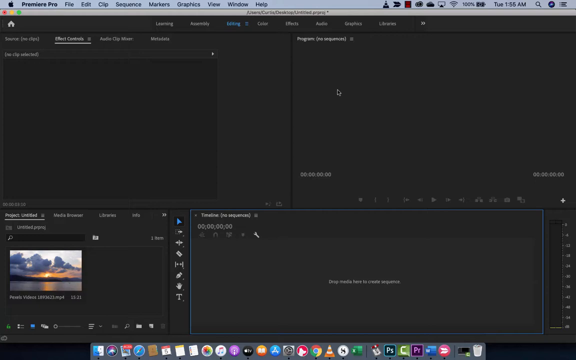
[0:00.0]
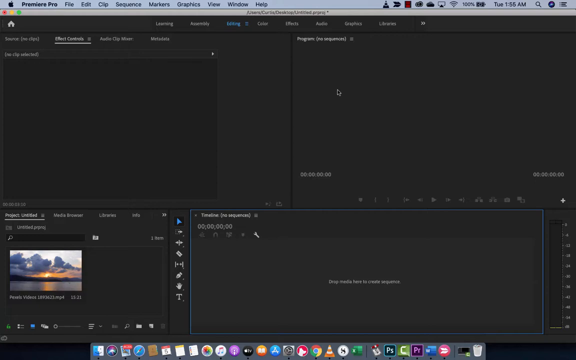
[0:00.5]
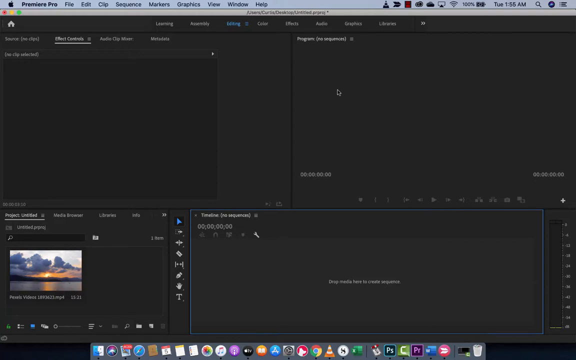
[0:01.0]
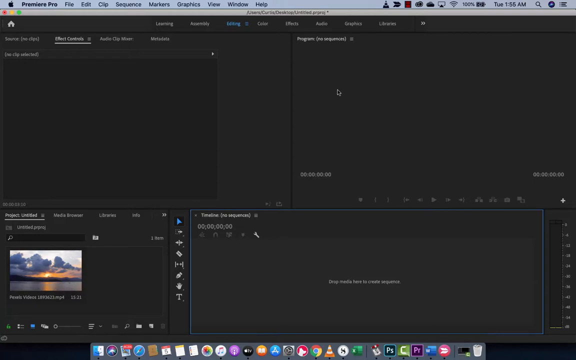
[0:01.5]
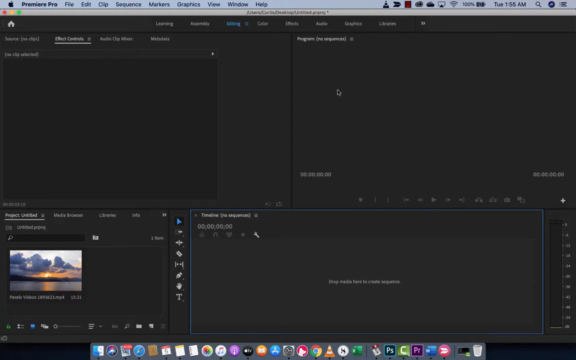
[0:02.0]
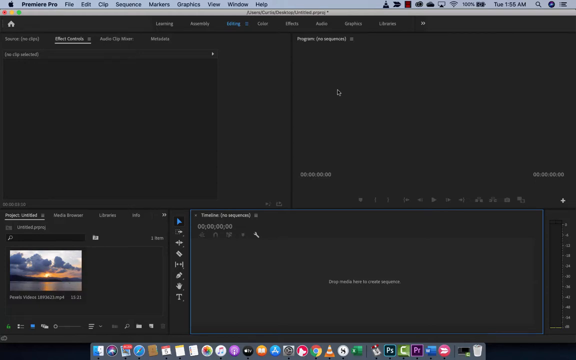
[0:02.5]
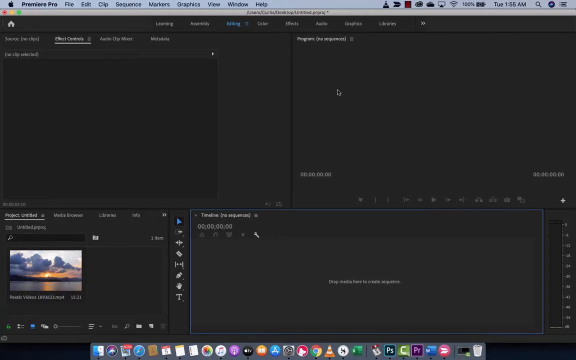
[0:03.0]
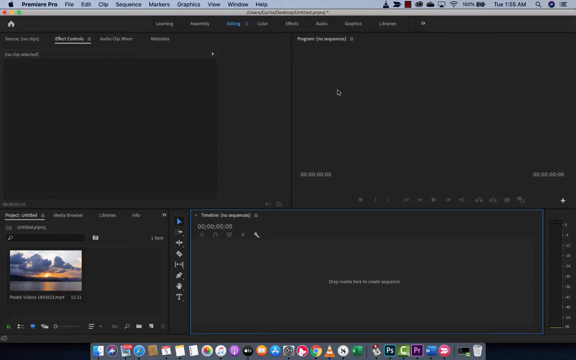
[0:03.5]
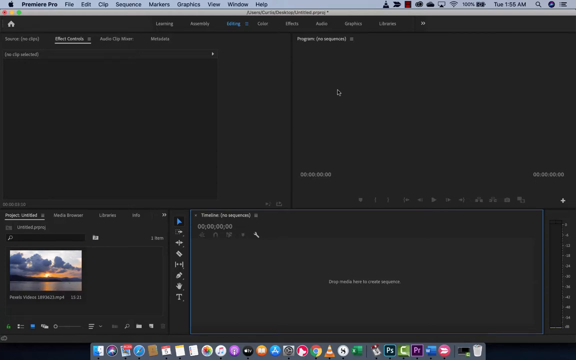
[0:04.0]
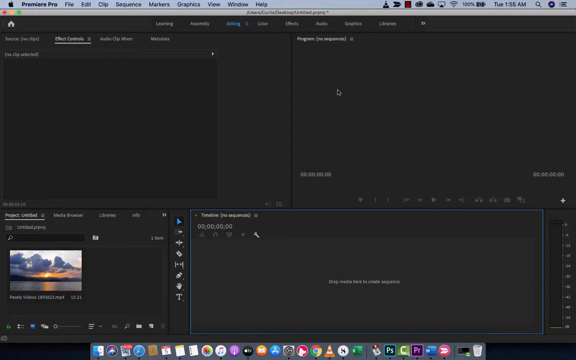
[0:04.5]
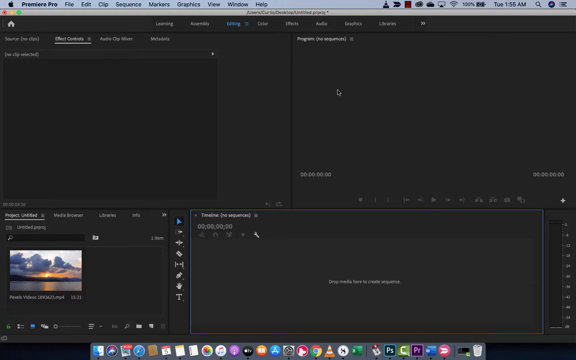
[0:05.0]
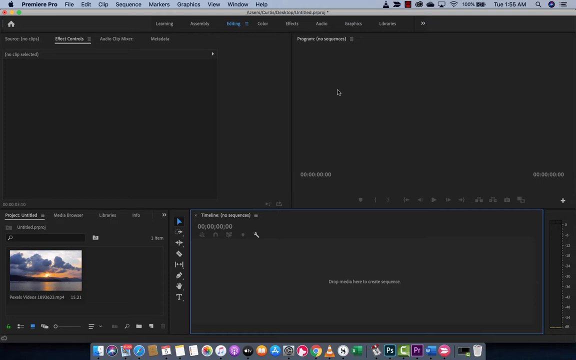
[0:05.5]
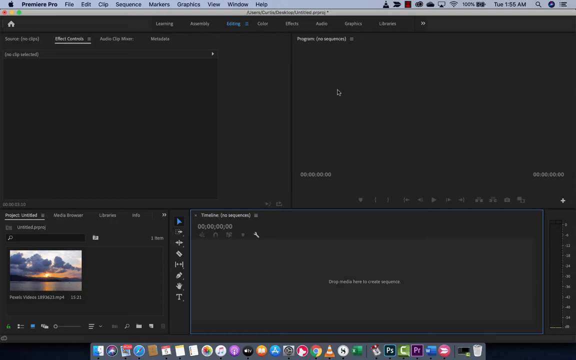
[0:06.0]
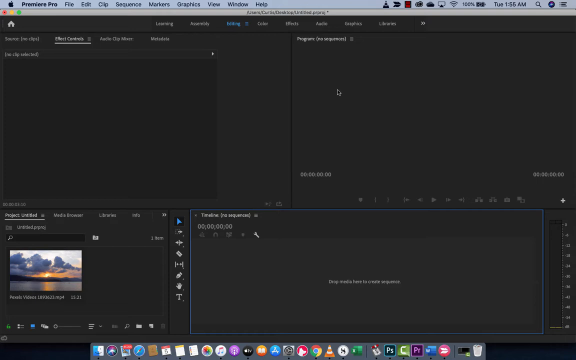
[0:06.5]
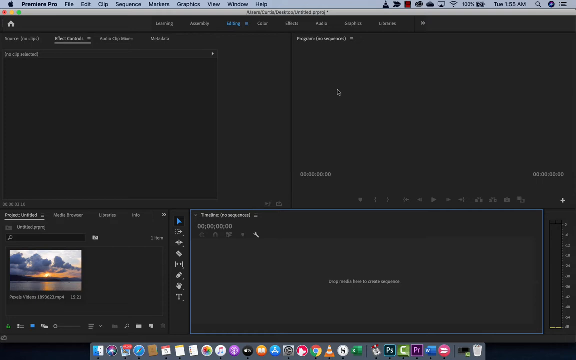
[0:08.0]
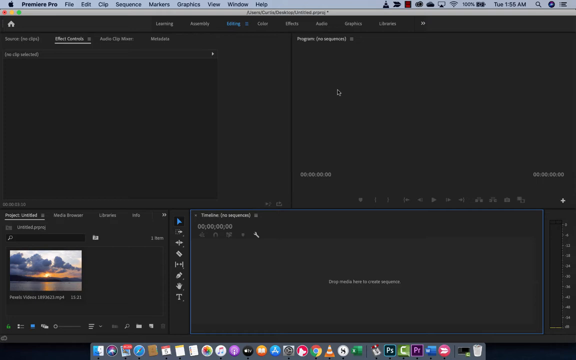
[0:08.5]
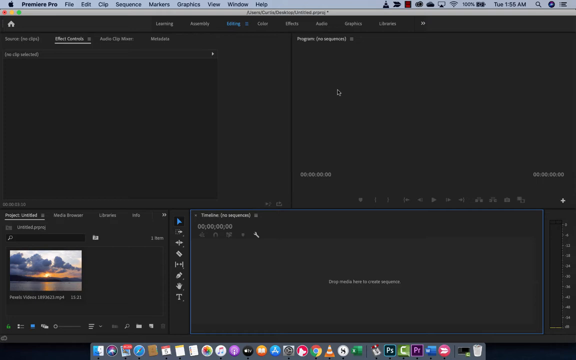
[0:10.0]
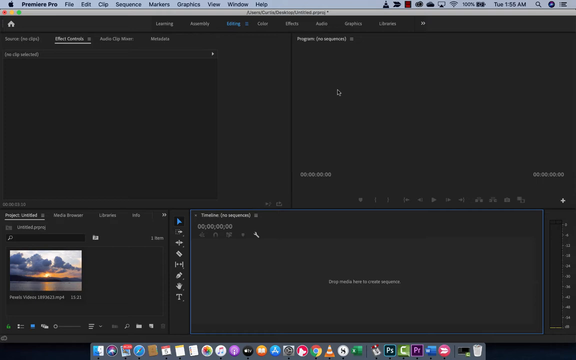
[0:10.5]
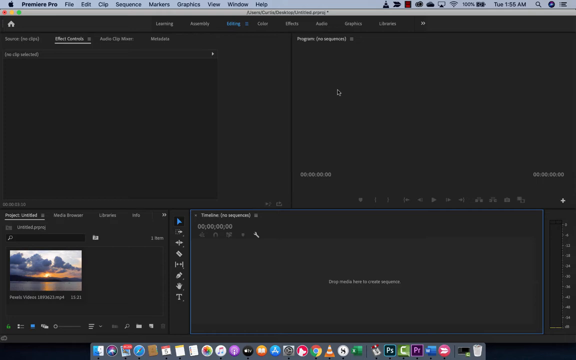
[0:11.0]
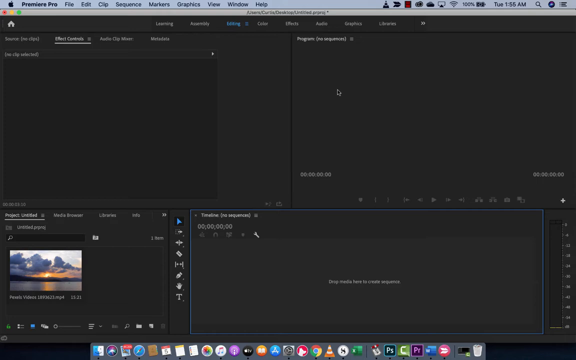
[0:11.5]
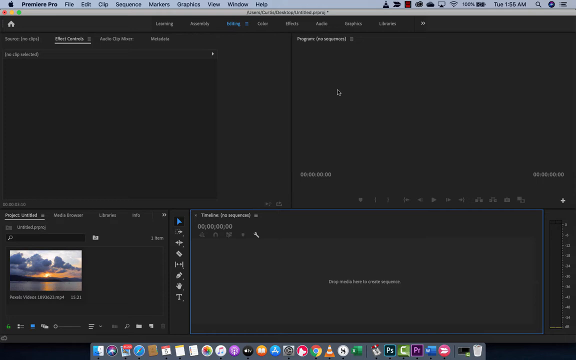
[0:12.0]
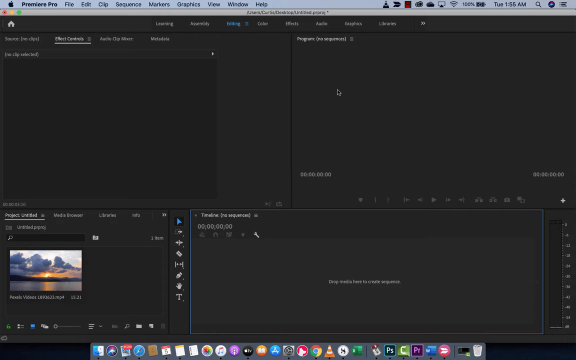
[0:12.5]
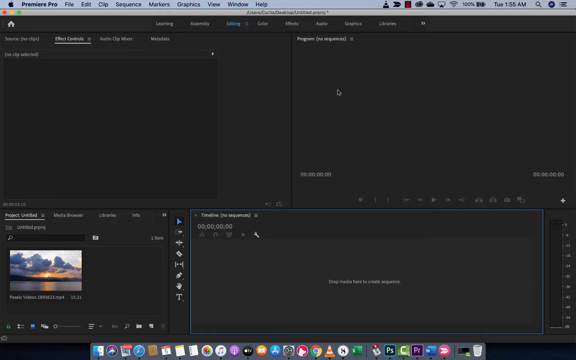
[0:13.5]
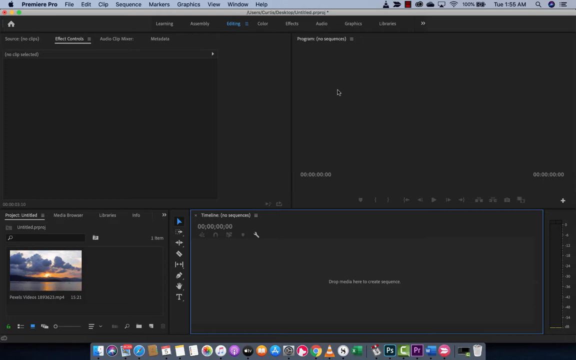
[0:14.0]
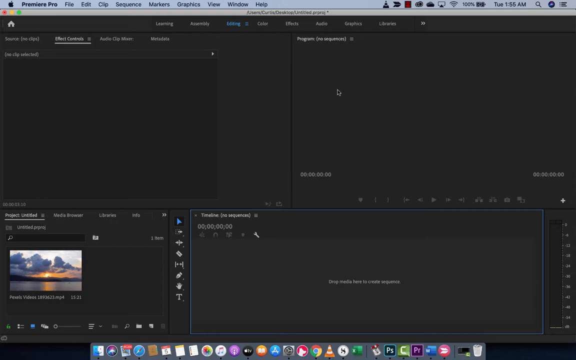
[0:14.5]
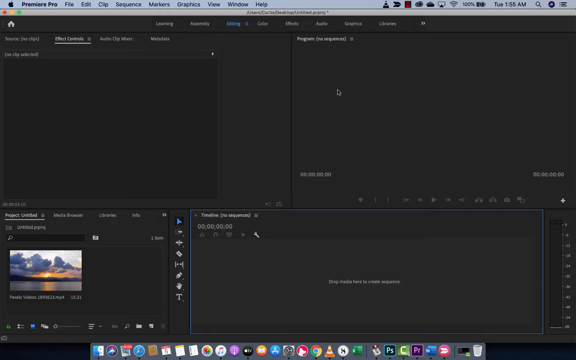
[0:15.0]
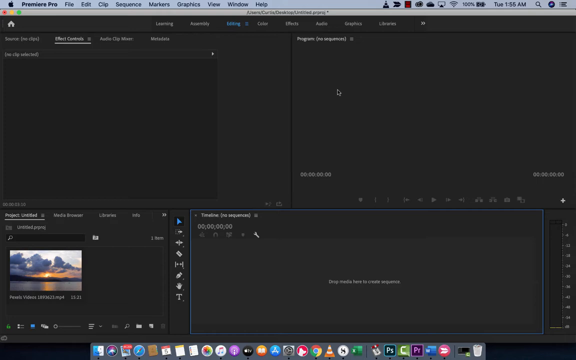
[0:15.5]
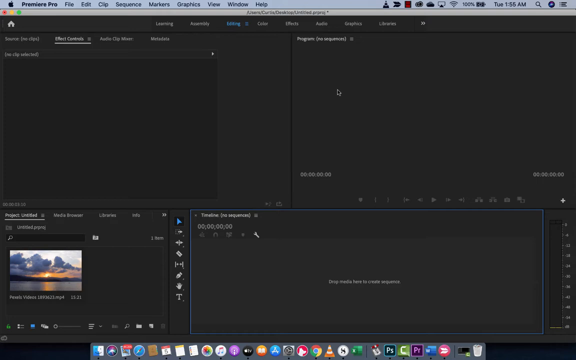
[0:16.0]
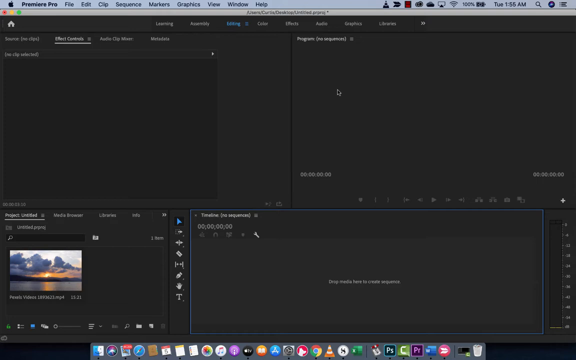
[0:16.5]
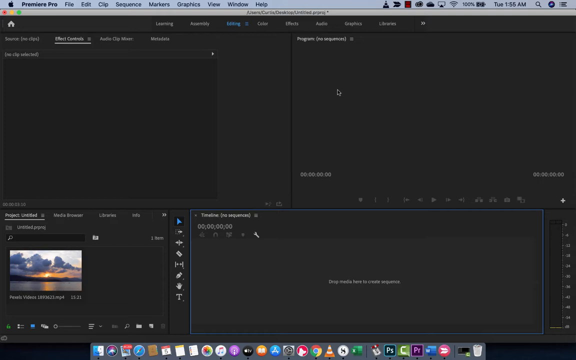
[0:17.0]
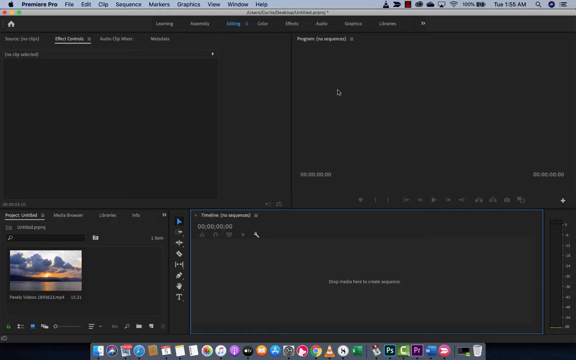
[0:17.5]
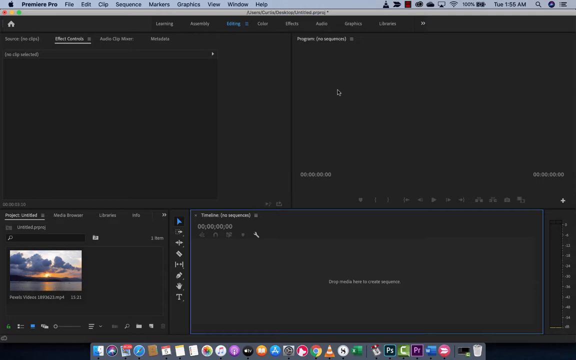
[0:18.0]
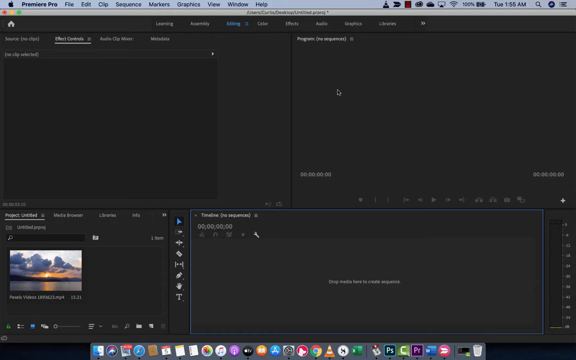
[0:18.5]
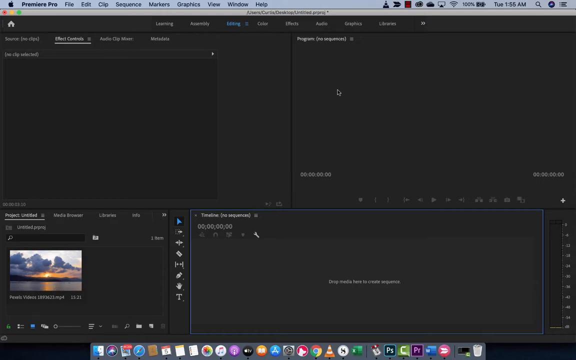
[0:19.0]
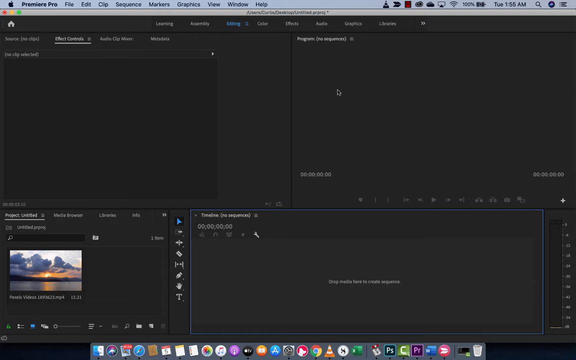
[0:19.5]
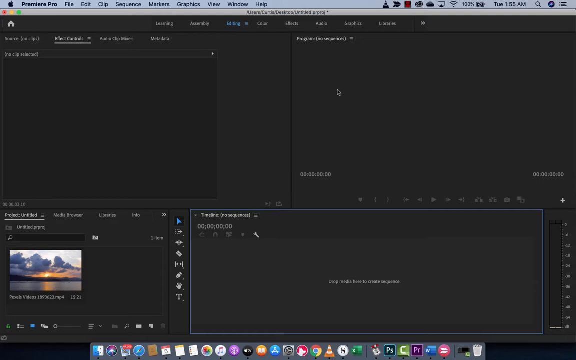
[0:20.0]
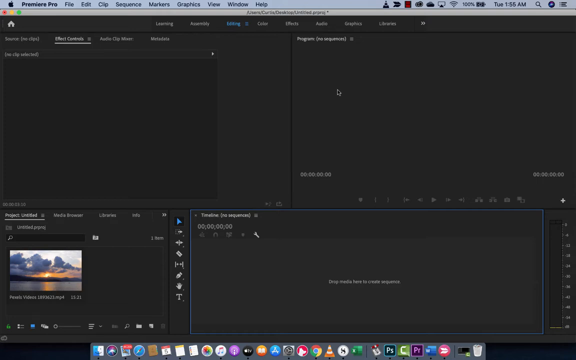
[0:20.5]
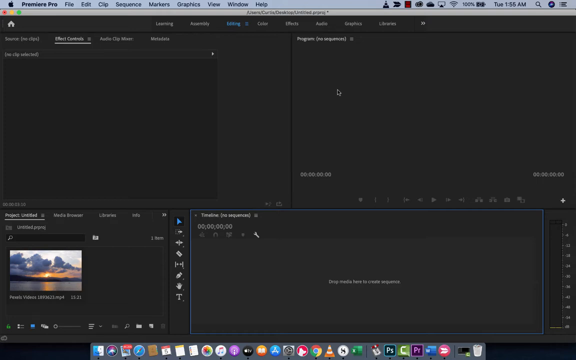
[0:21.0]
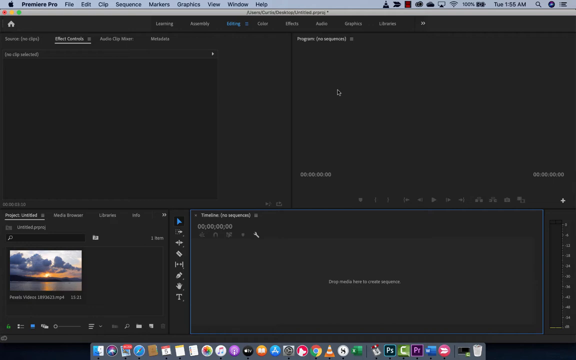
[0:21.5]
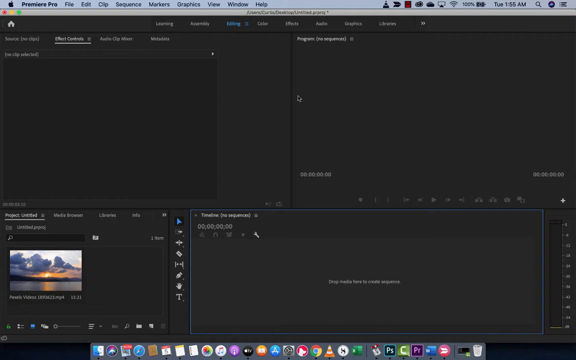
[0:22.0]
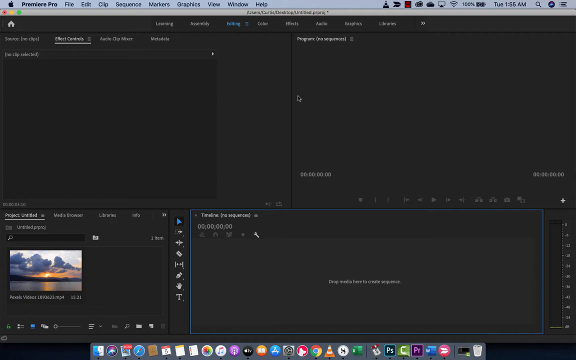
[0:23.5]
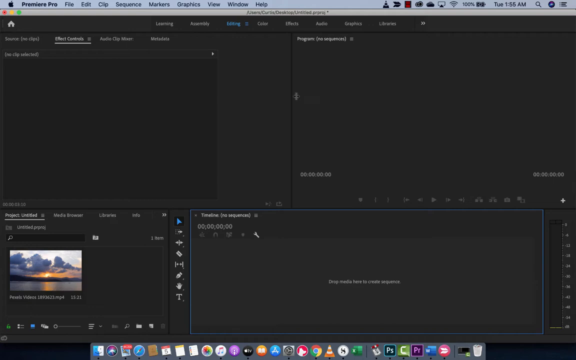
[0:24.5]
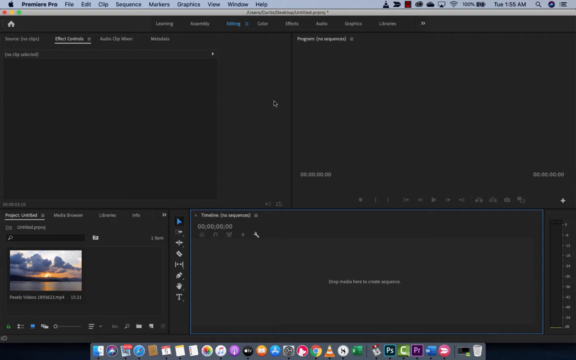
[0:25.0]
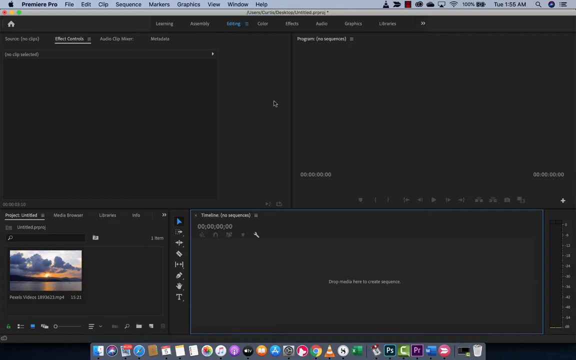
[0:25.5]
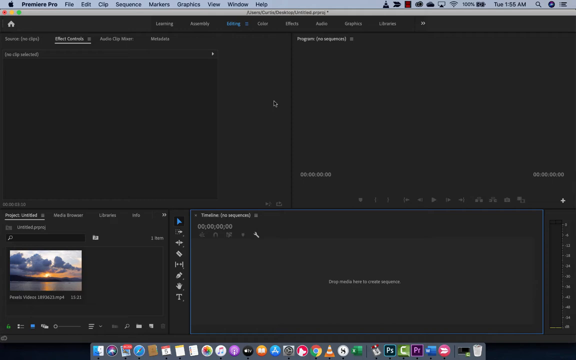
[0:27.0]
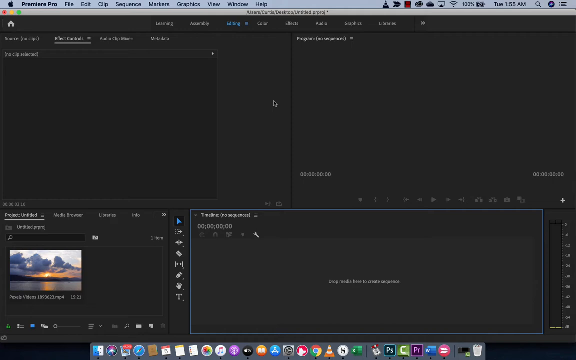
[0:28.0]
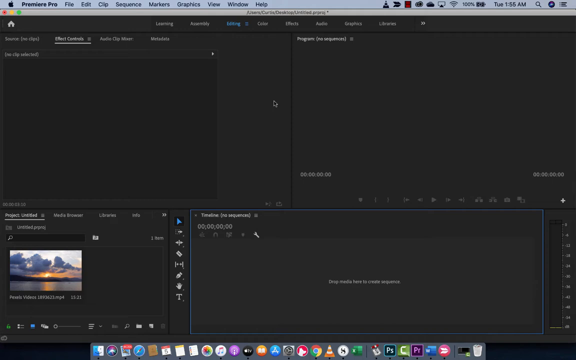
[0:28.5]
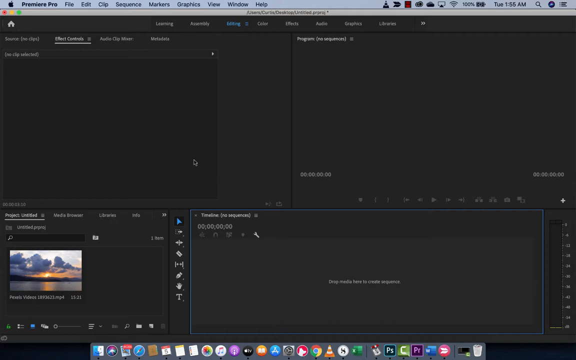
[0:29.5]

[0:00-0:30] A computer screen shows a program labeled "Premiere Pro" at the very top left. Multiple boxes fill the screen, and a mouse icon is at roughly the center top. In a box at the bottom left is what appears to be an image of the sun, clouds, and water. Among the other boxes, one labeled "Timeline" has a blue border. Along the very top of the screen are the options "File", "Edit", "Clip", "Sequence", "Markers", "Graphics", "View", "Window", and "Help". The mouse cursor stays in the same position until it moves very slightly to the left, then a little more to the left, and then jets down to the left and a little further down and to the left.